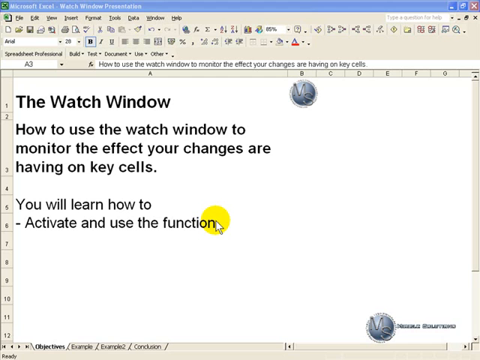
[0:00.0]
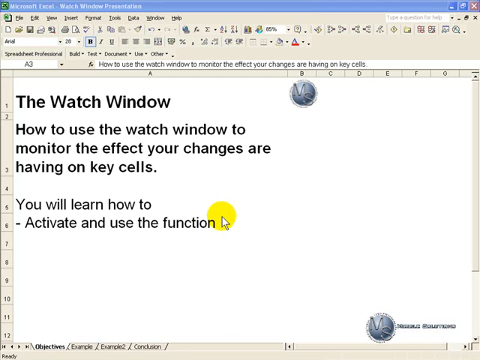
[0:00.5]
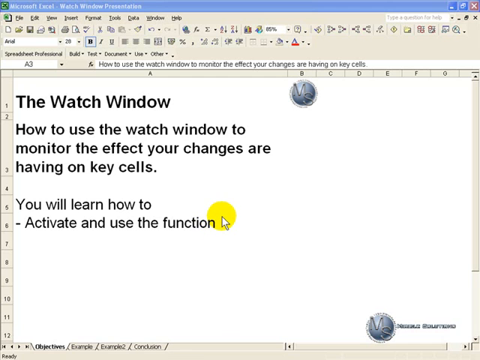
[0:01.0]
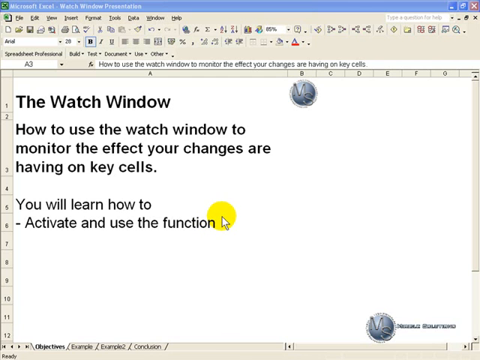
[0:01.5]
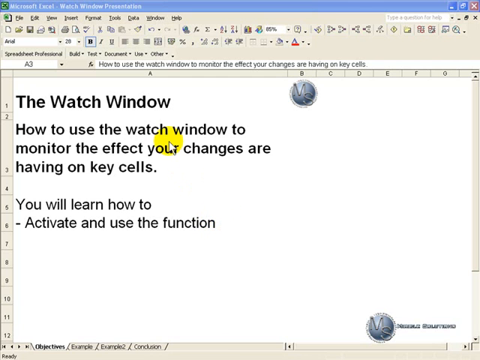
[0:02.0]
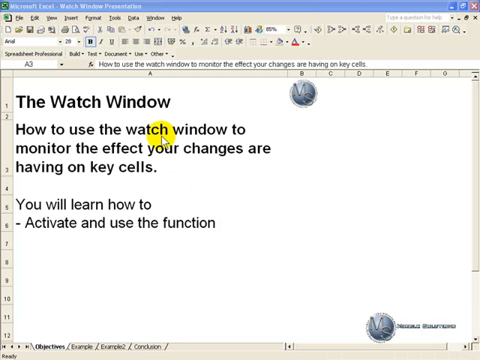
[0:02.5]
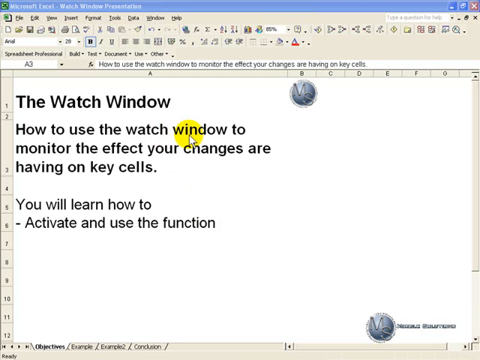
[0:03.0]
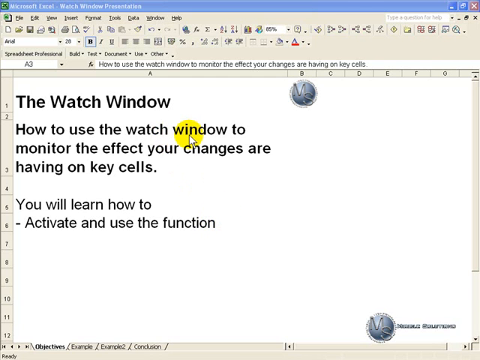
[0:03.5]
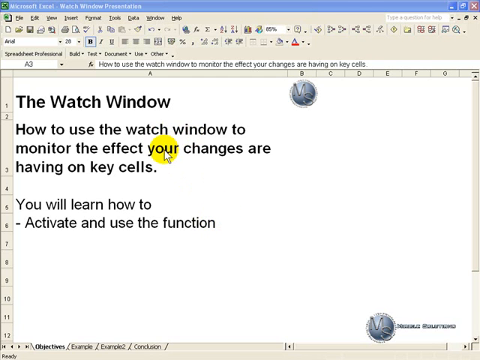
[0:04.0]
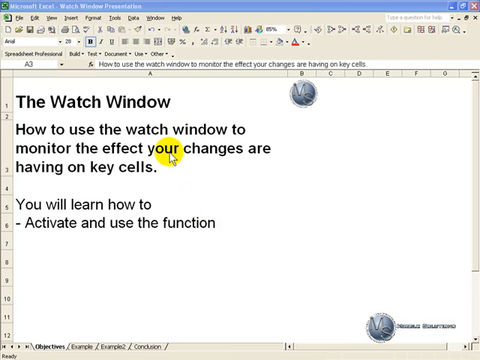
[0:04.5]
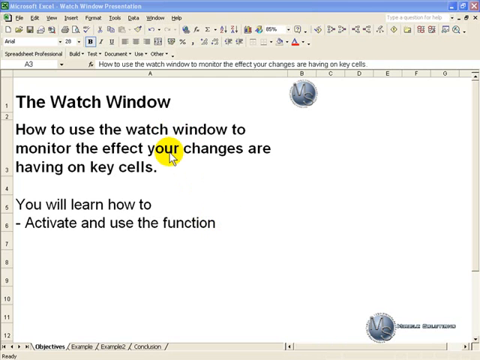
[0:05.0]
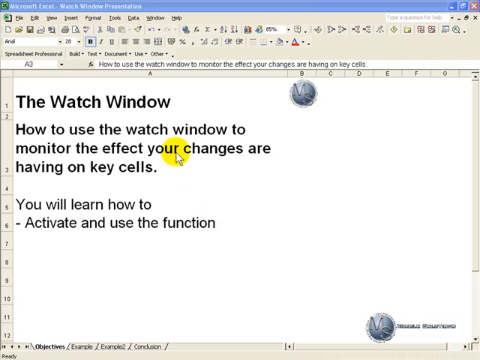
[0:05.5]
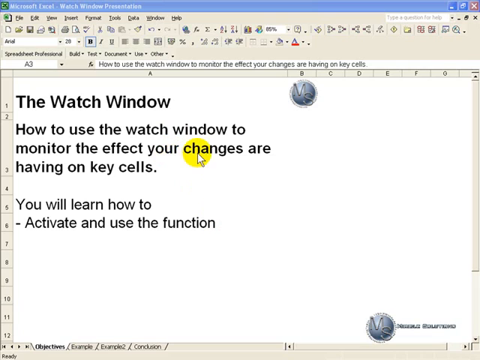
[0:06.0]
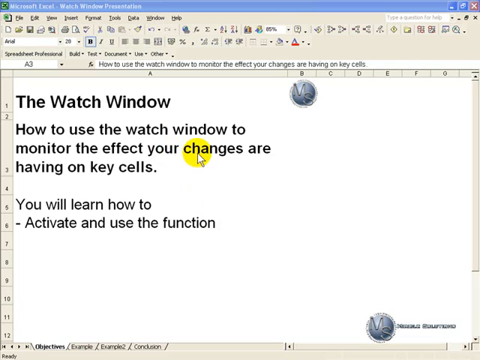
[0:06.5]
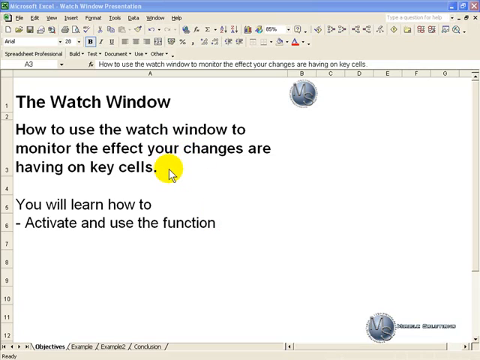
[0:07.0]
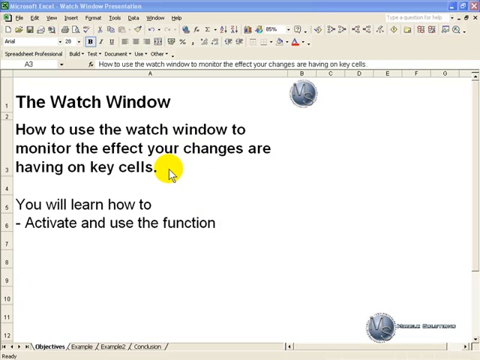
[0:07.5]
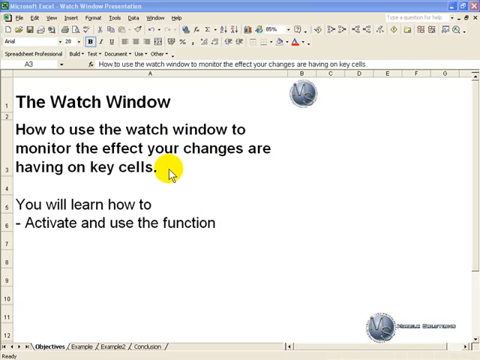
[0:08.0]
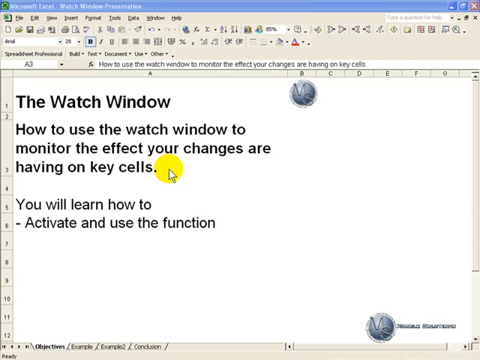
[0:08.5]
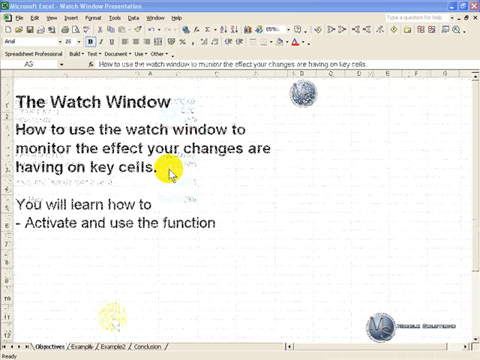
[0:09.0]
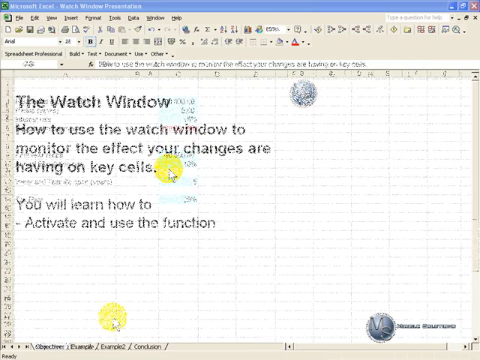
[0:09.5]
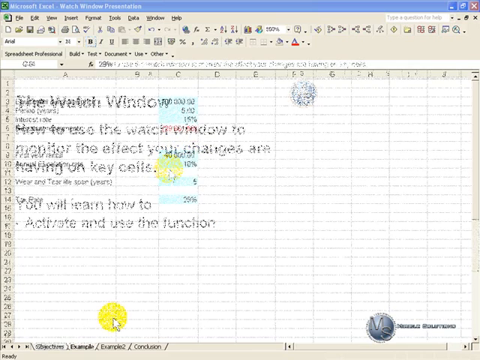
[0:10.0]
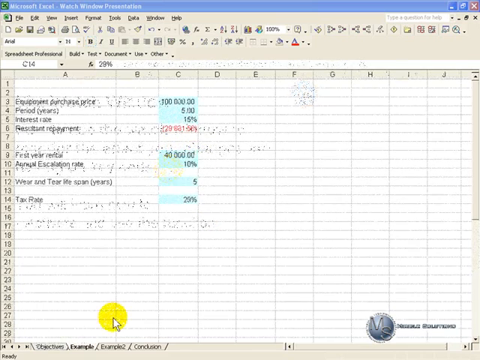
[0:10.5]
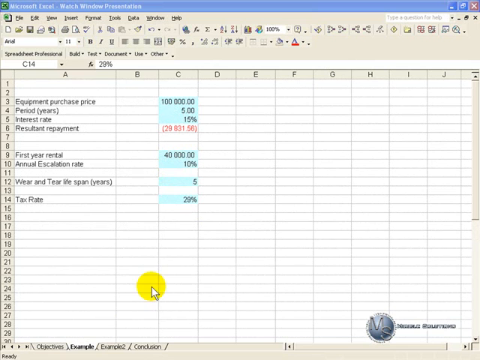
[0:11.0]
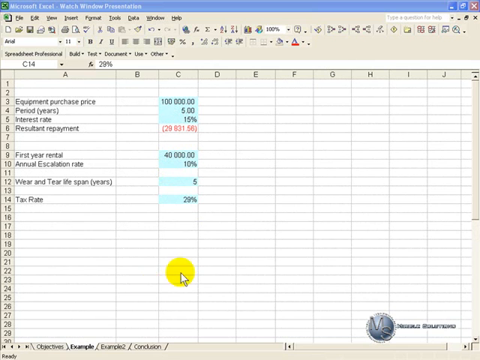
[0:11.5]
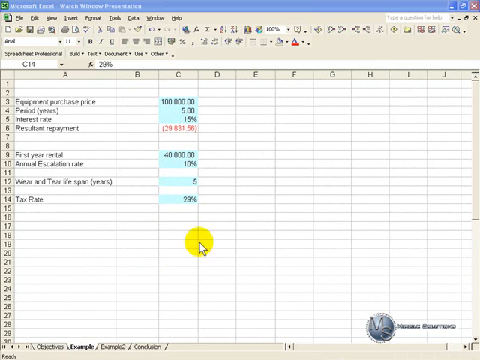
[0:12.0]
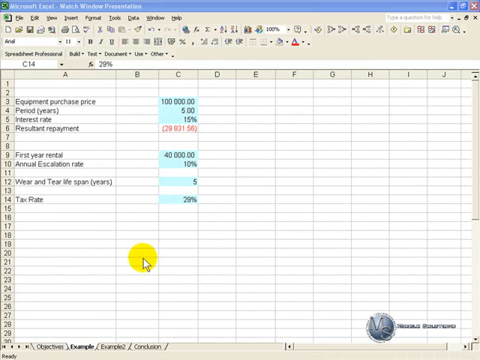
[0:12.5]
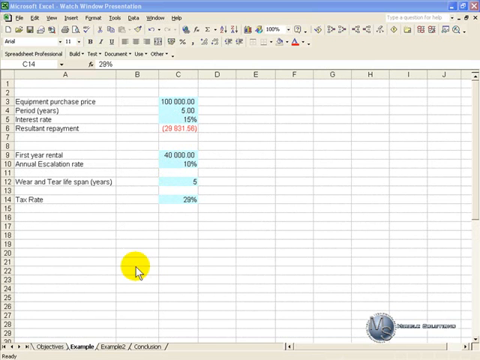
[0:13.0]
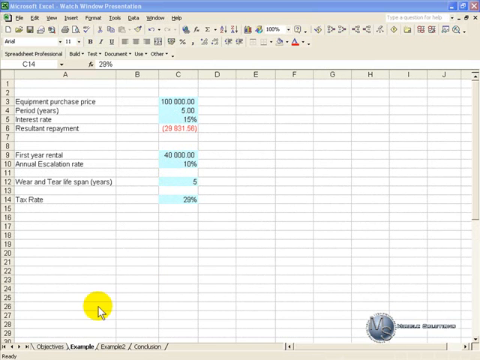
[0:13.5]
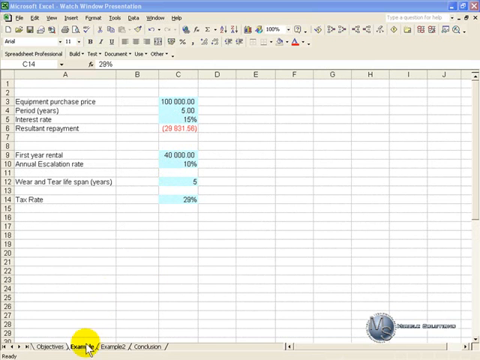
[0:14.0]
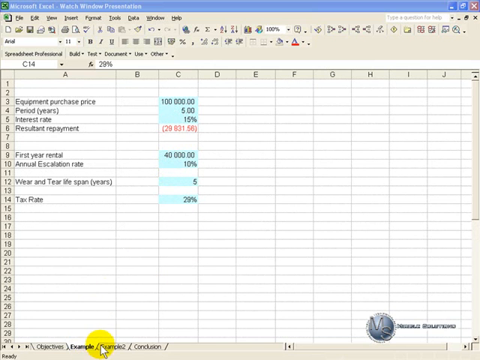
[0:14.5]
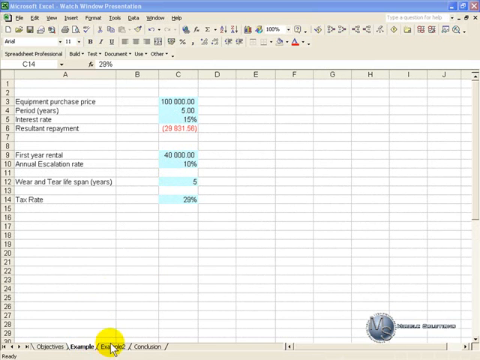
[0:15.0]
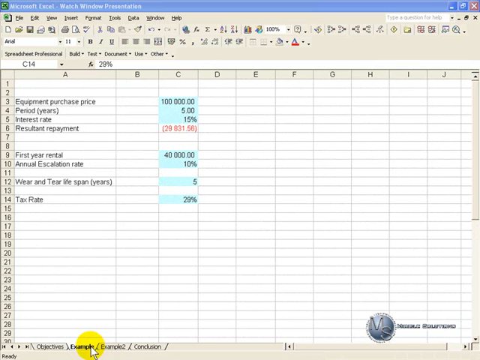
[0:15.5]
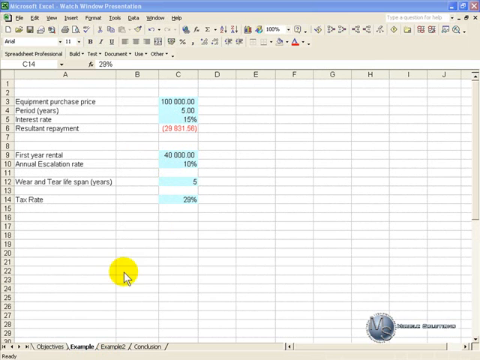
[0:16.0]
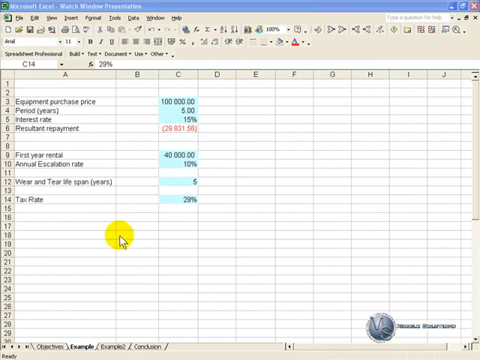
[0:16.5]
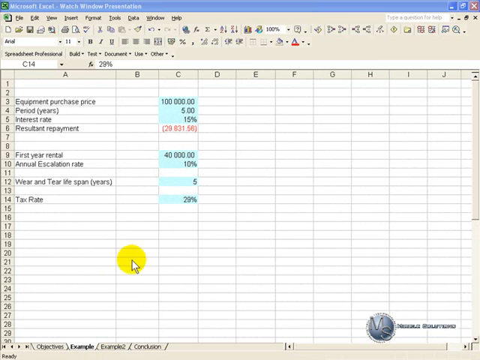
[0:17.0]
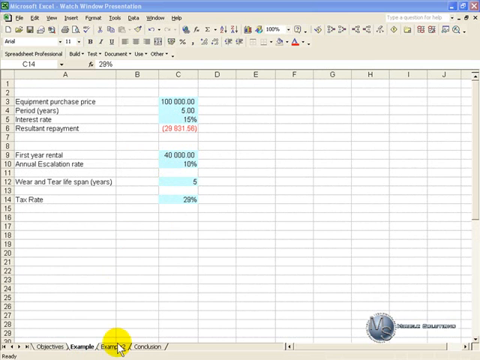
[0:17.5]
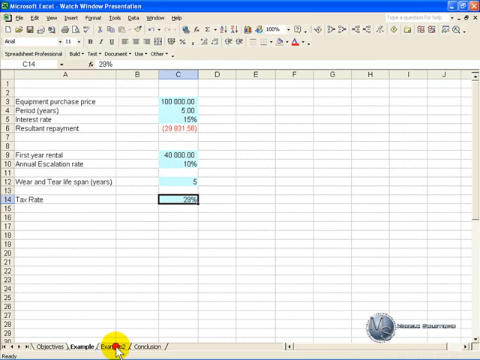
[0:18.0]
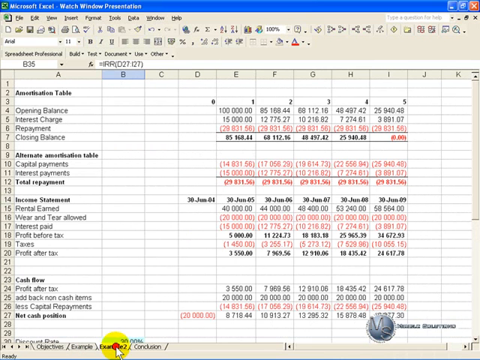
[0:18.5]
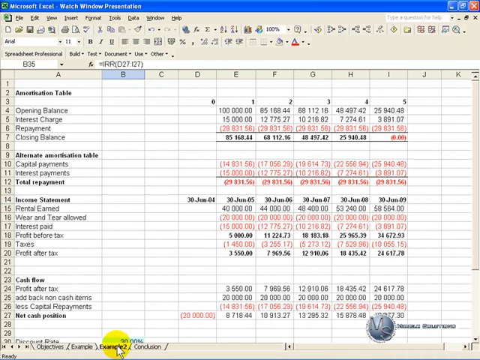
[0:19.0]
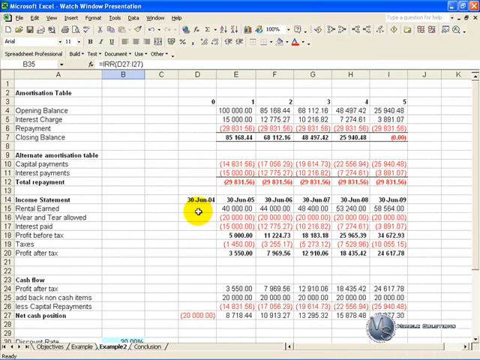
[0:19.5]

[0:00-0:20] A screen recording shows a Microsoft Excel sheet on a computer. The Microsoft Excel bar is at the top, with the quit, minimize and window buttons on the right, and below it a toolbar with File, Edit, View, Insert, Format, Data, Window and Help, plus icons for changing the font, the text color and similar settings. A white background with a grid has numbers going down the y-axis and letters across the x-axis. The mouse pointer is highlighted with a yellow circle around it. Text in the A column reads "the watch window, how to use the watch window to monitor the effect your changes are having on key cells. You will learn how to activate and use the function." That screen goes away and a new grid appears, numbered 1 through 30 down the y-axis and lettered A through J across the x-axis. Under column A it reads "equipment per purchase, period, interest rate, result repayment, first year rental, annual escalation rate, wear and tear lifespan, and tax rate." The C column has blue highlighted numbers, and in row 6 of column C there are red numbers in parentheses. The mouse moves around the screen with the yellow circle following it.